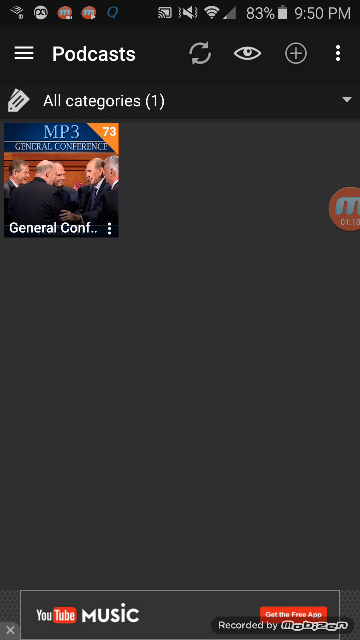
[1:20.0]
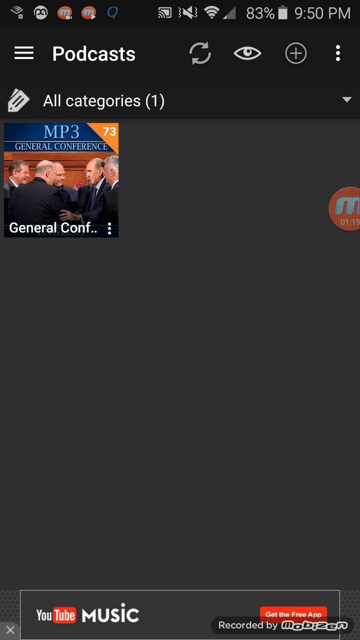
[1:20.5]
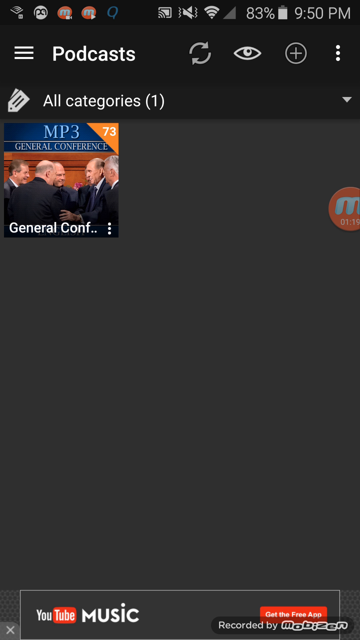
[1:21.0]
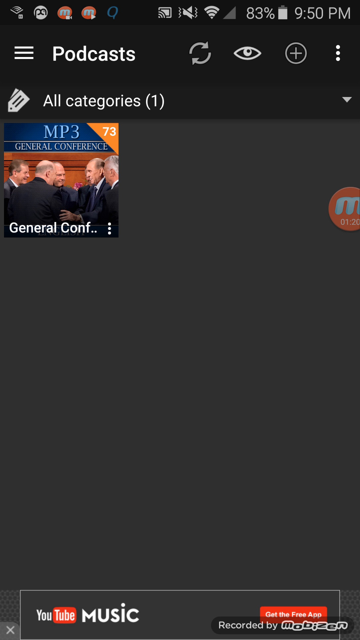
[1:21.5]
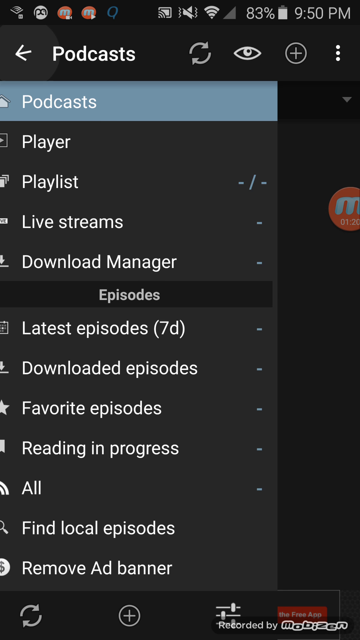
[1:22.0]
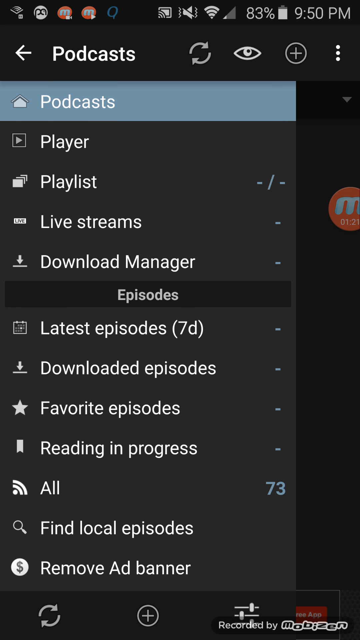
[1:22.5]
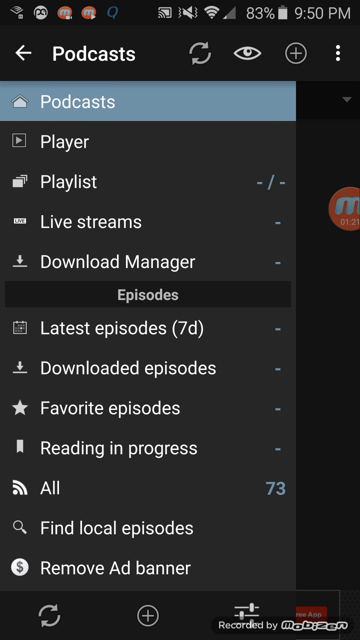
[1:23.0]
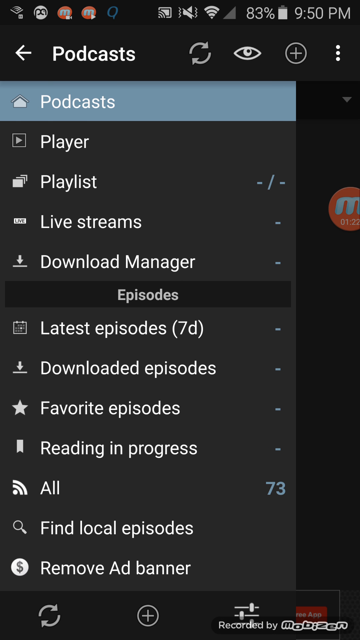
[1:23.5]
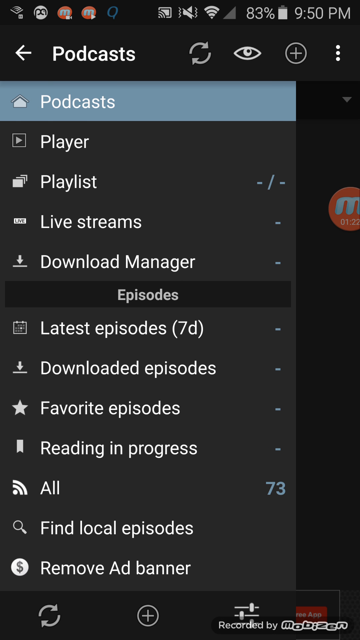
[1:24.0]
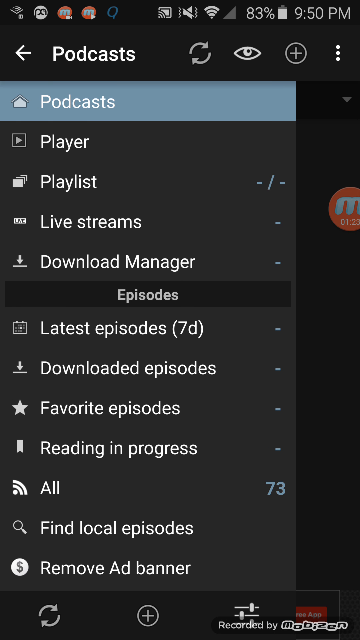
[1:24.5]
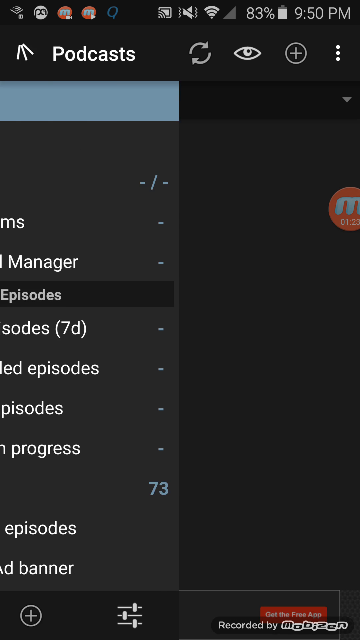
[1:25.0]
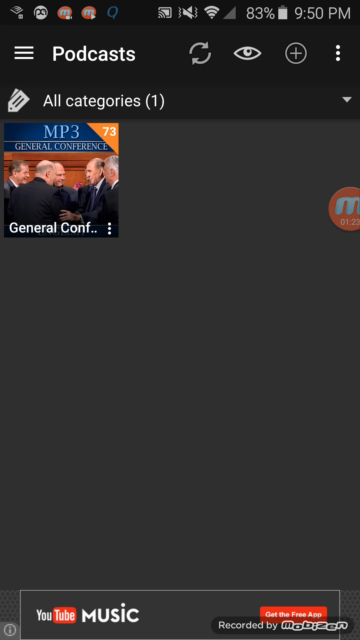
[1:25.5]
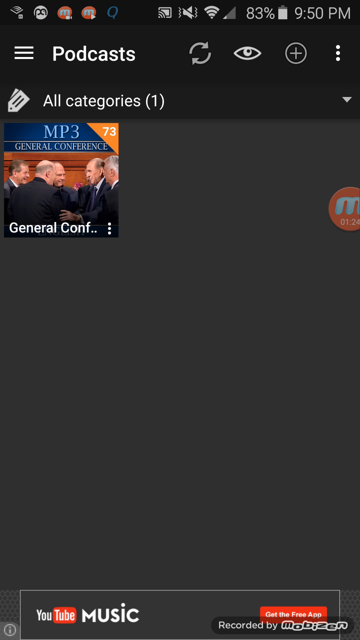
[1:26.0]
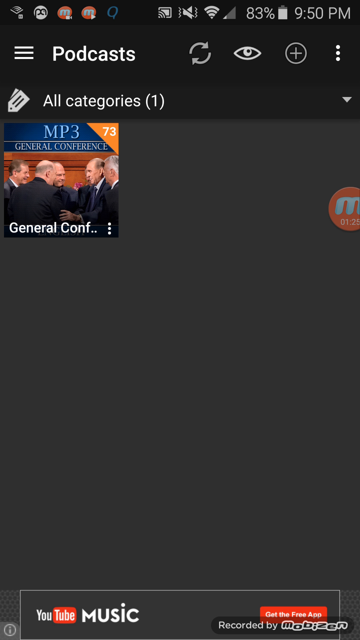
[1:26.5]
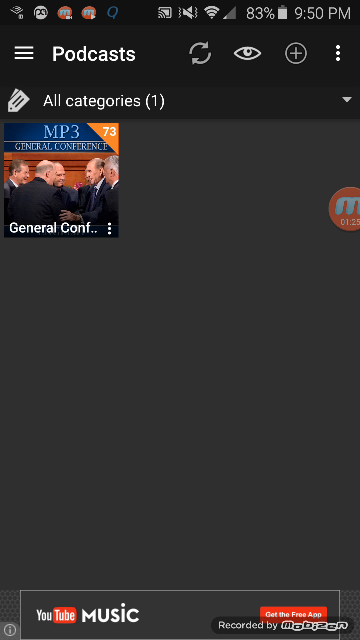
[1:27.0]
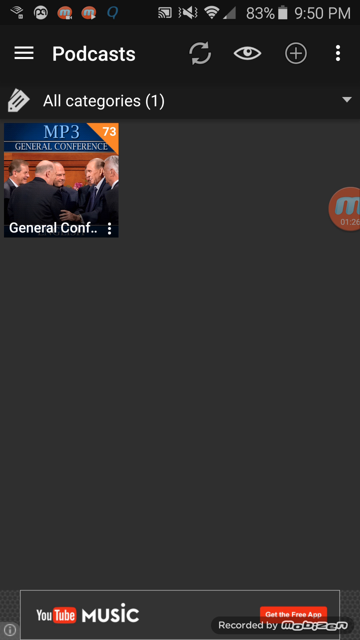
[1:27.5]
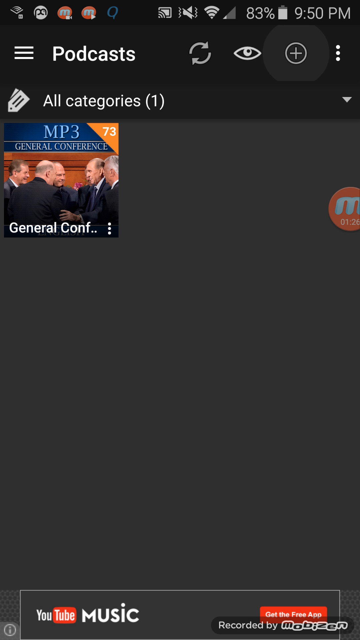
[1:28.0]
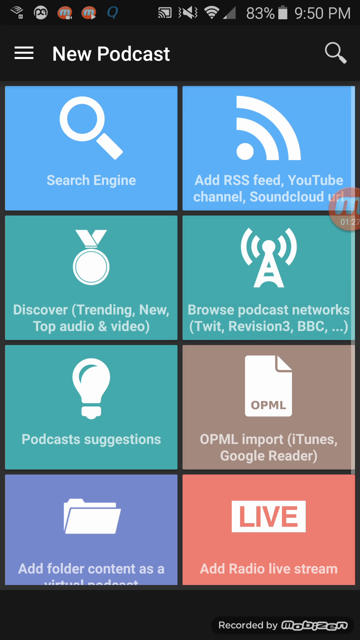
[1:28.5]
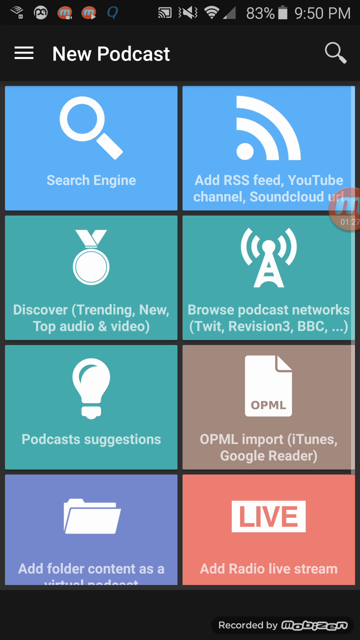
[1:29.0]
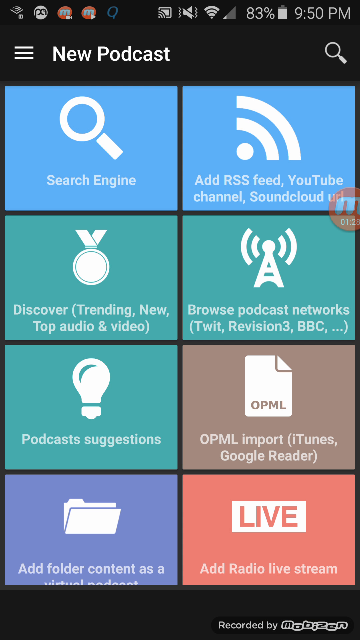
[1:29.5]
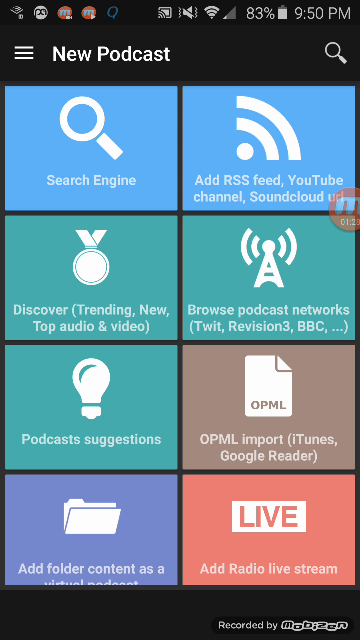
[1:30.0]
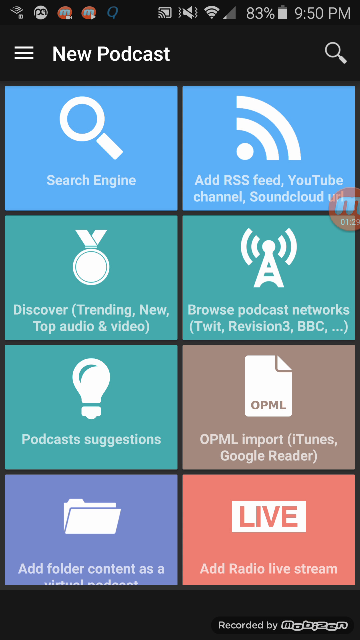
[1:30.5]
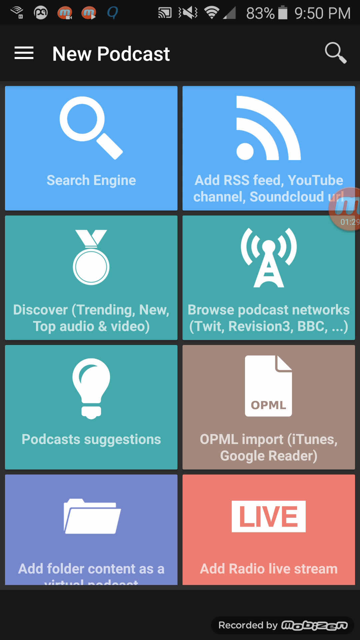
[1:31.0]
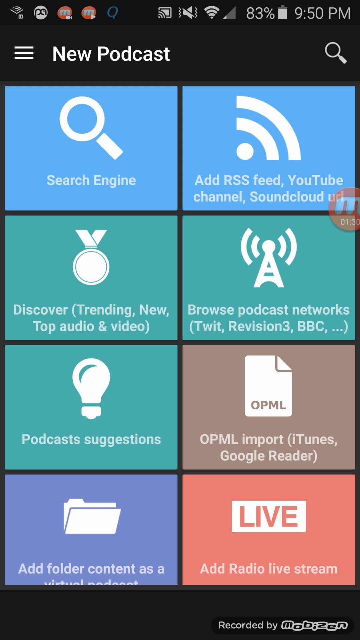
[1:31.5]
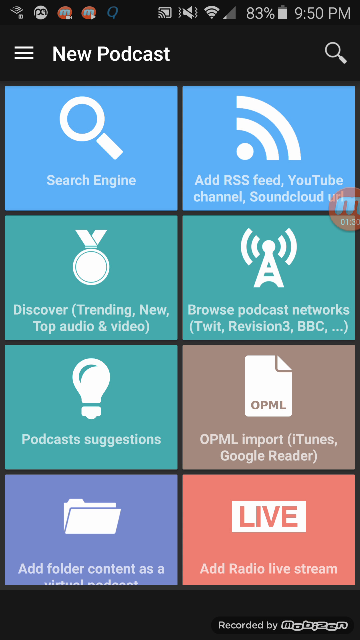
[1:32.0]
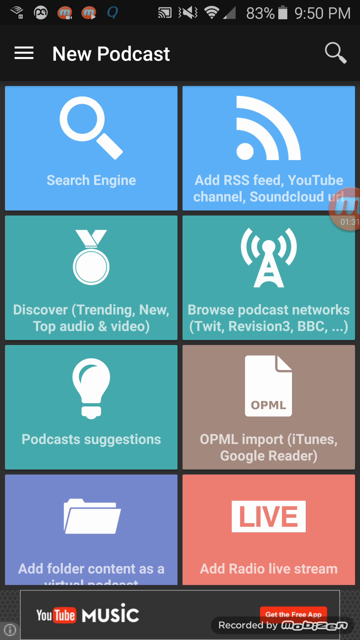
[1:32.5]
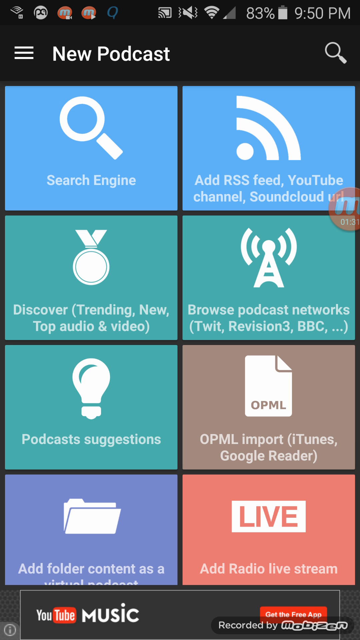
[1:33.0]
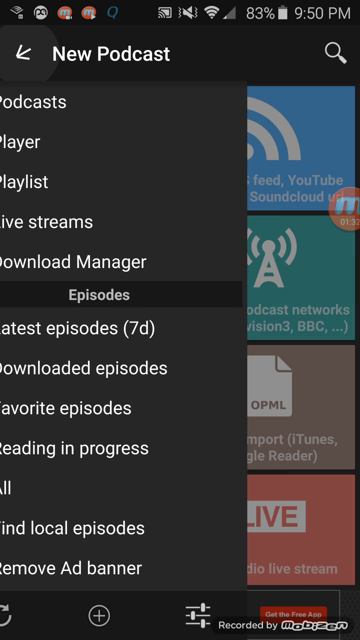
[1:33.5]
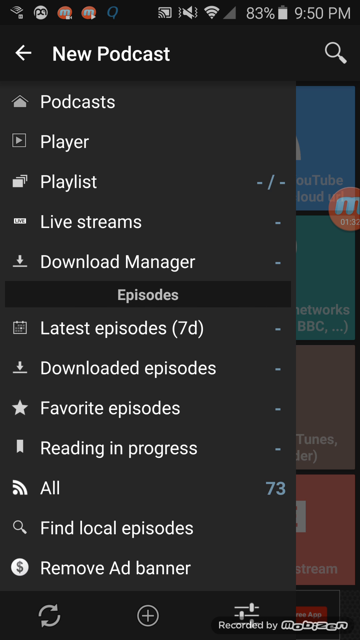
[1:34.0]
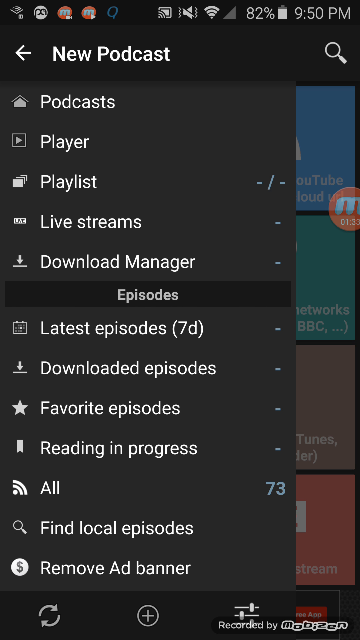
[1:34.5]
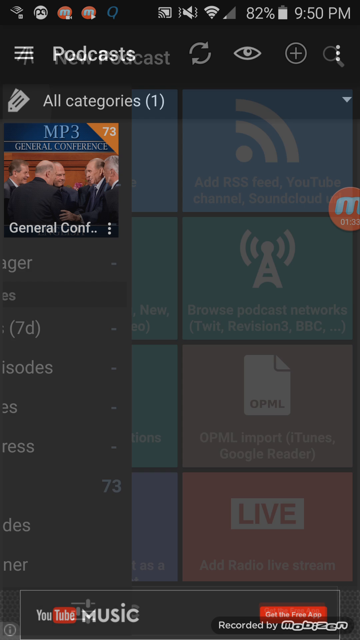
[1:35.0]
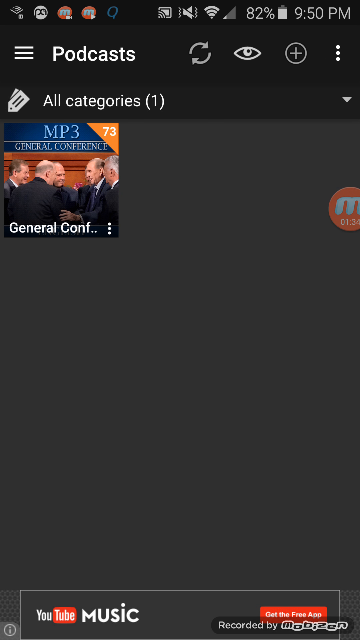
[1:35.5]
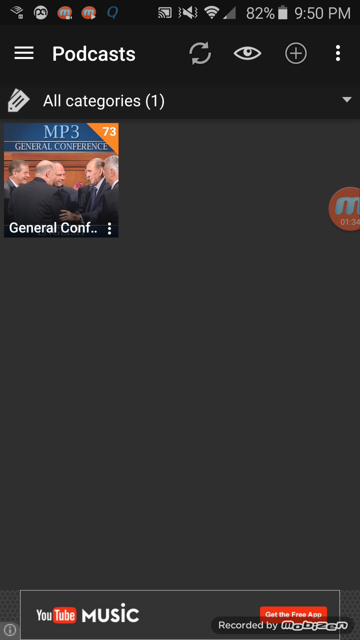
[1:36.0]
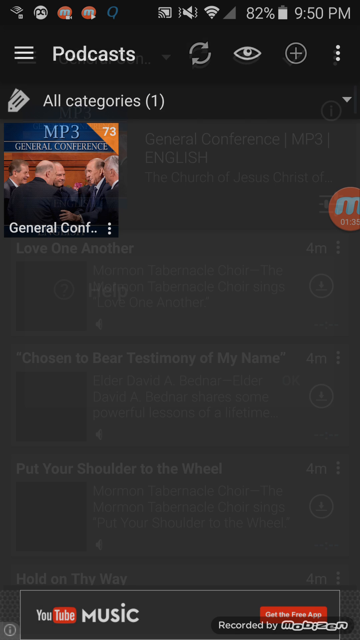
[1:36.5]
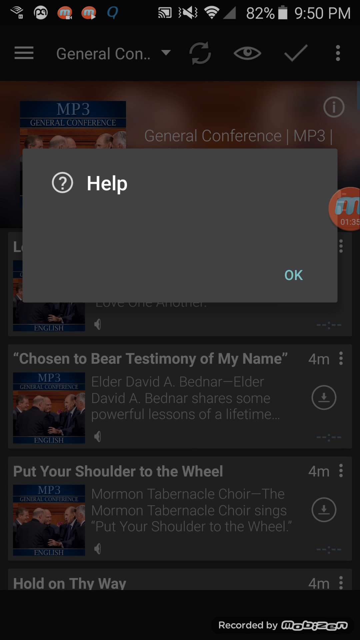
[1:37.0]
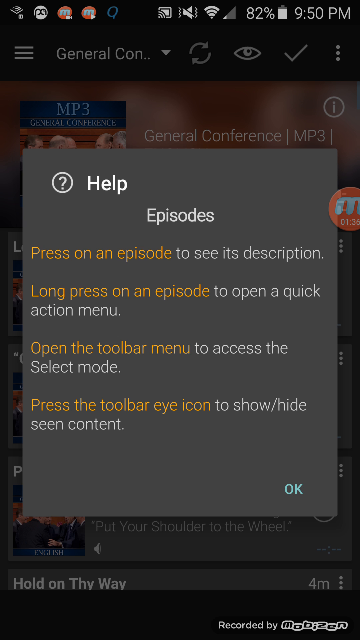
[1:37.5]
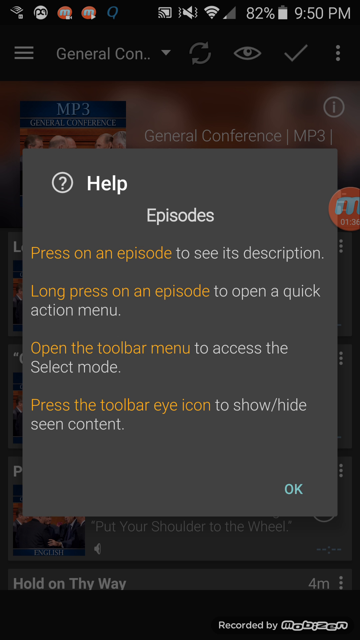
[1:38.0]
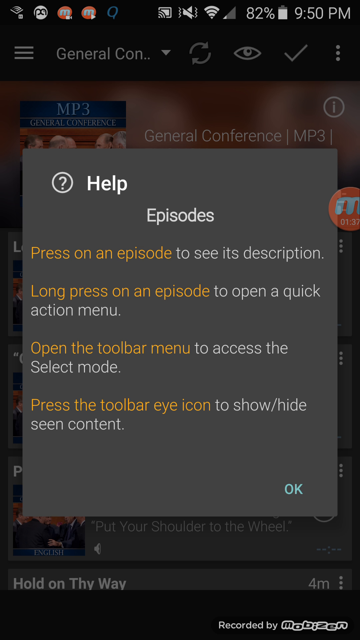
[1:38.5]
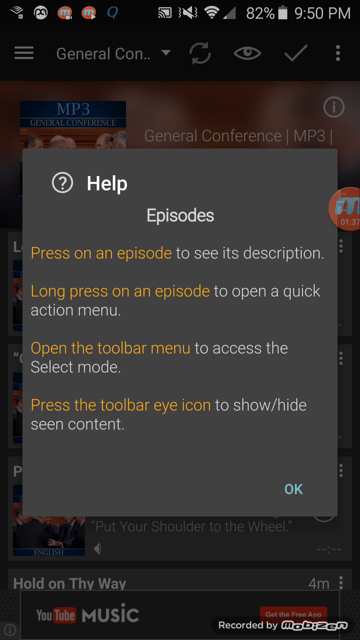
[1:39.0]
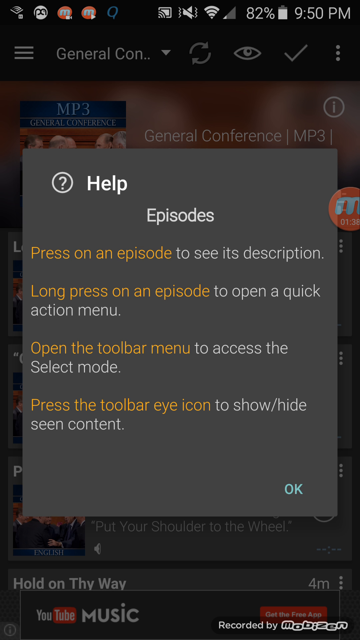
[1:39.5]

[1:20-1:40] On the cell phone screen, an app that looks pulled up in the upper left is the General Conference MP3. Someone slides a menu over from the left to the right; it lists podcasts, player, playlists, live streams, and download manager, with an episodes tab underneath and the episode options below that. The menu slides back to the left and disappears, and the plus button in the upper right is tapped, bringing up the new podcast menu with several podcasts shown as available. The app appears to be a podcasts app, and several of its options are pulled up; one of them appears to be a set of tiles including search engine, add RSS feed, and add radio live stream, which is the lower right tile.